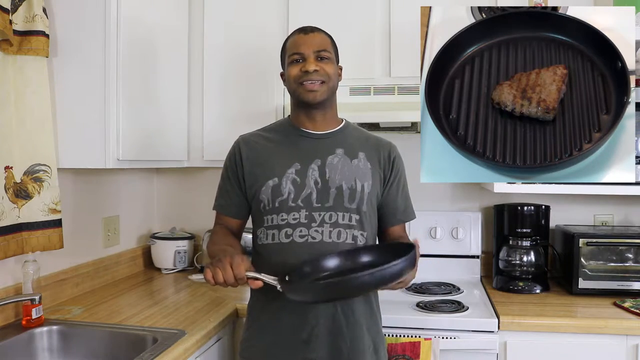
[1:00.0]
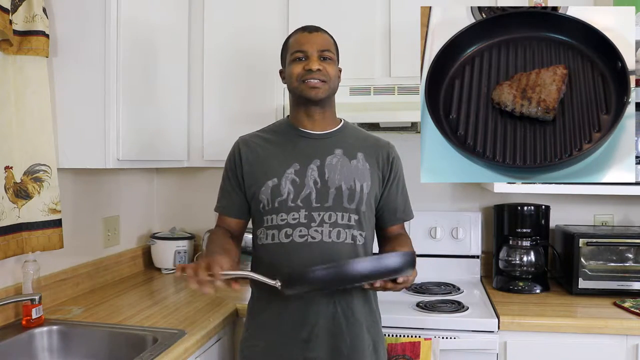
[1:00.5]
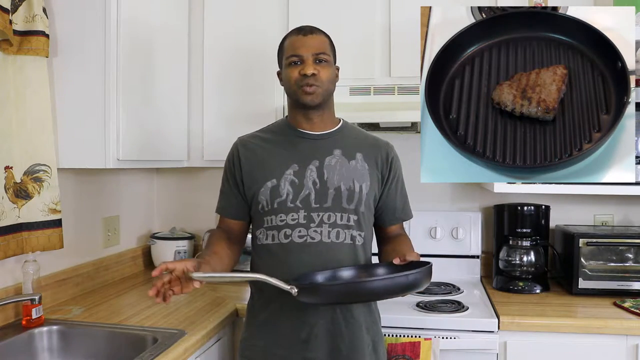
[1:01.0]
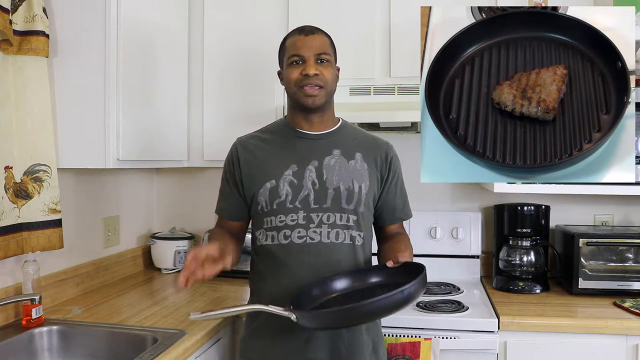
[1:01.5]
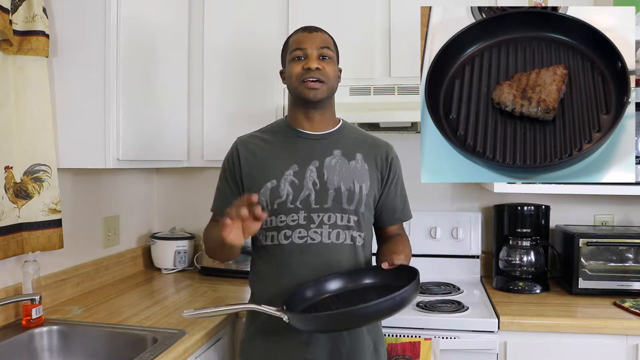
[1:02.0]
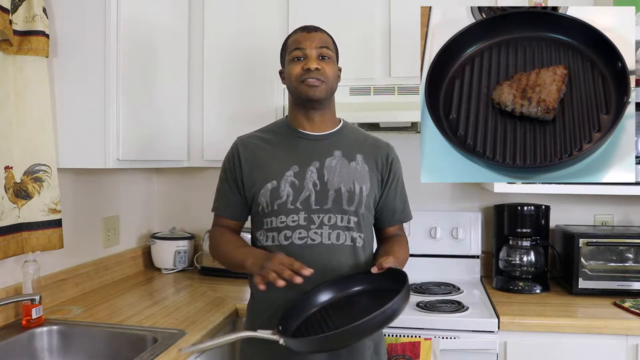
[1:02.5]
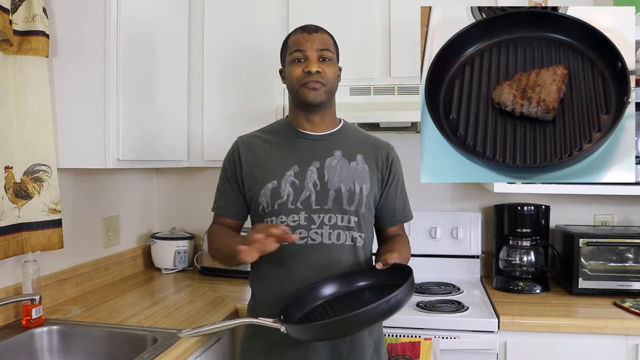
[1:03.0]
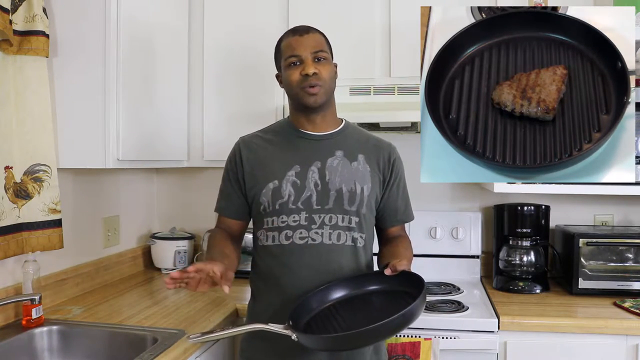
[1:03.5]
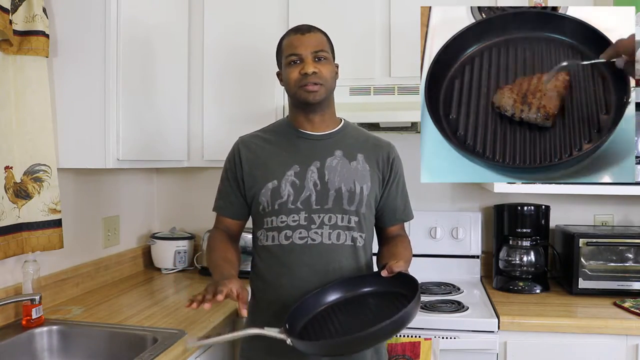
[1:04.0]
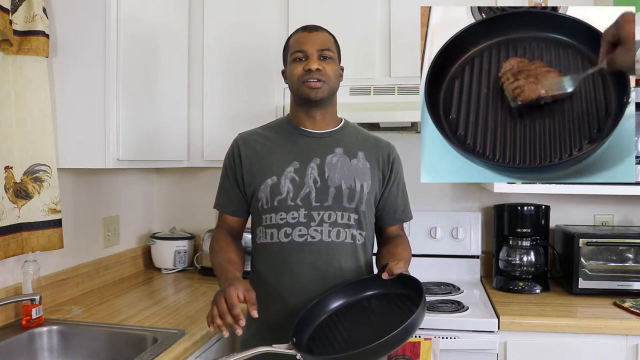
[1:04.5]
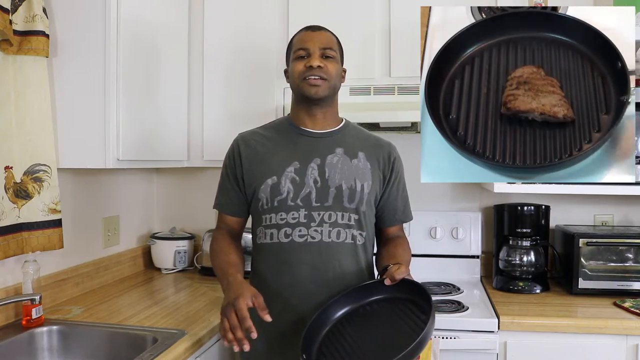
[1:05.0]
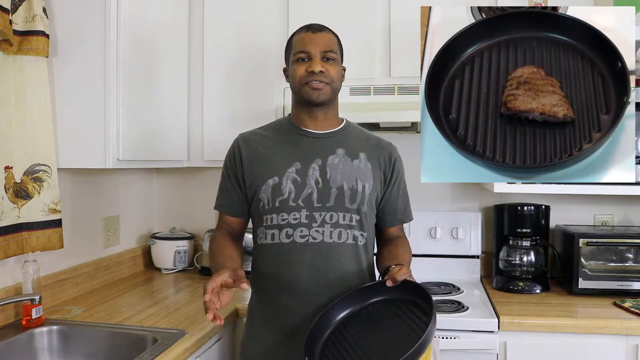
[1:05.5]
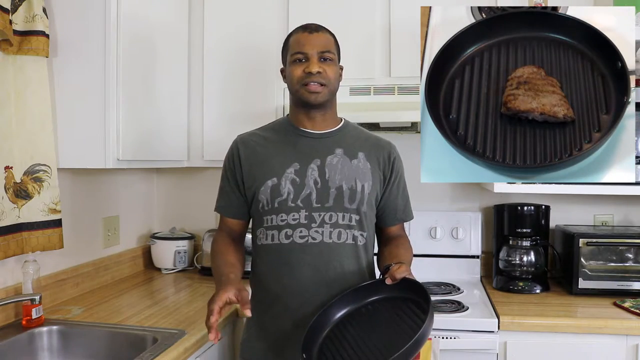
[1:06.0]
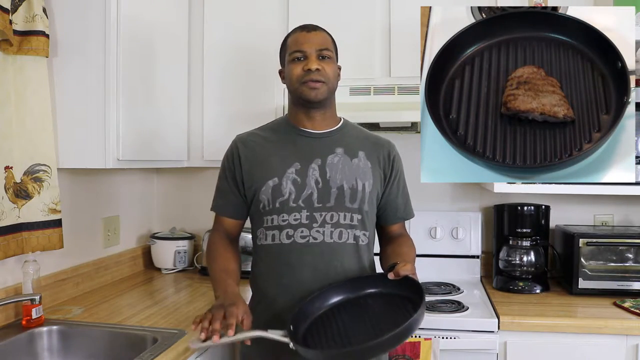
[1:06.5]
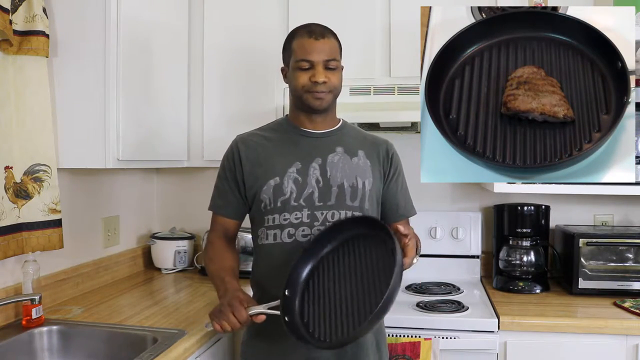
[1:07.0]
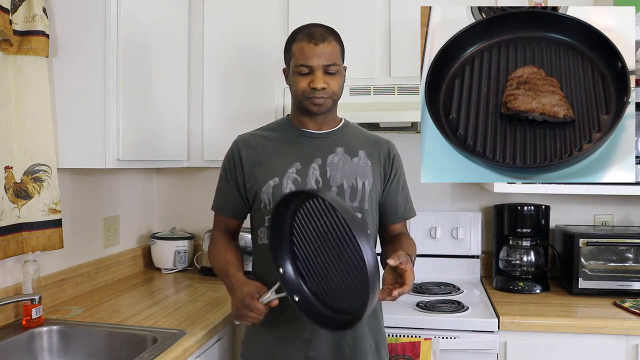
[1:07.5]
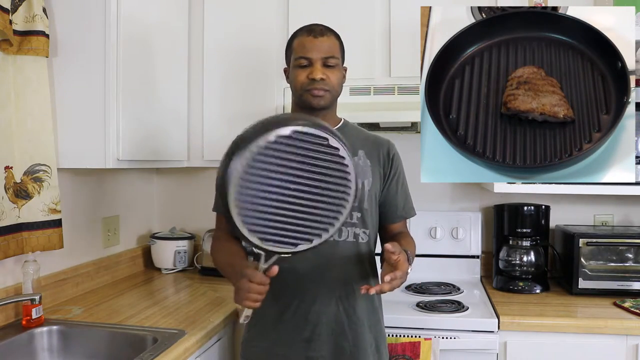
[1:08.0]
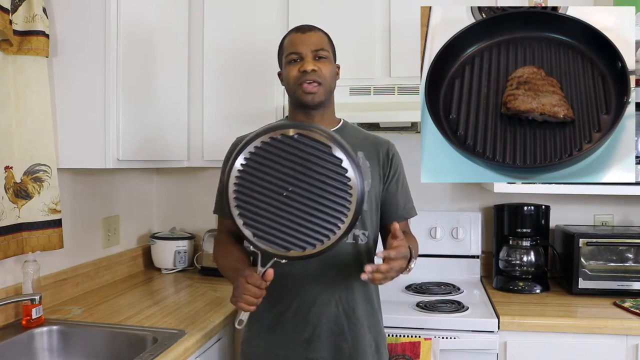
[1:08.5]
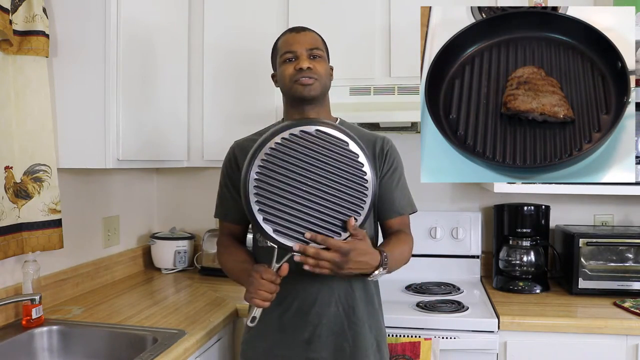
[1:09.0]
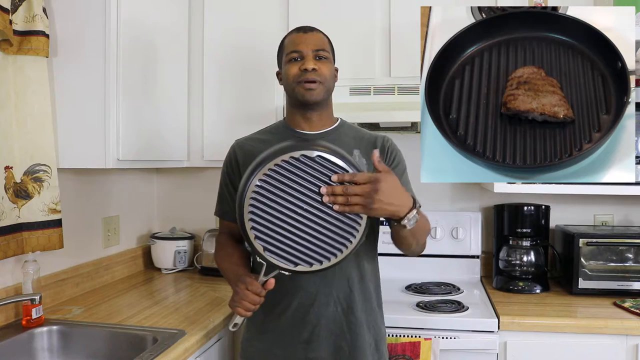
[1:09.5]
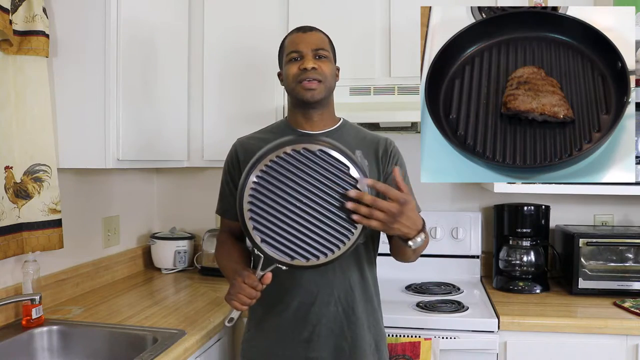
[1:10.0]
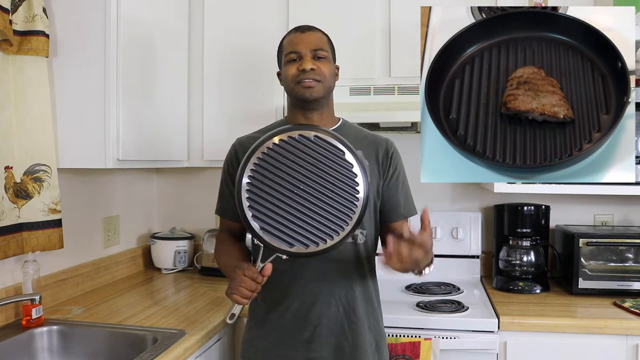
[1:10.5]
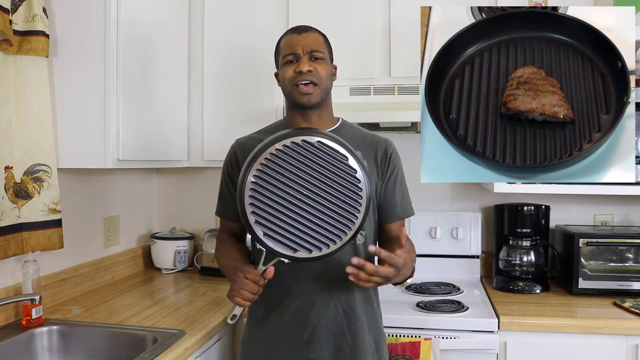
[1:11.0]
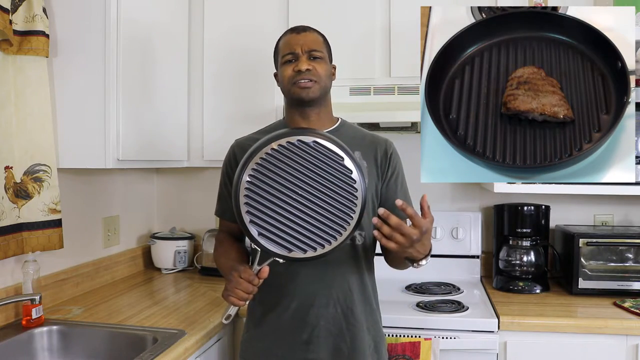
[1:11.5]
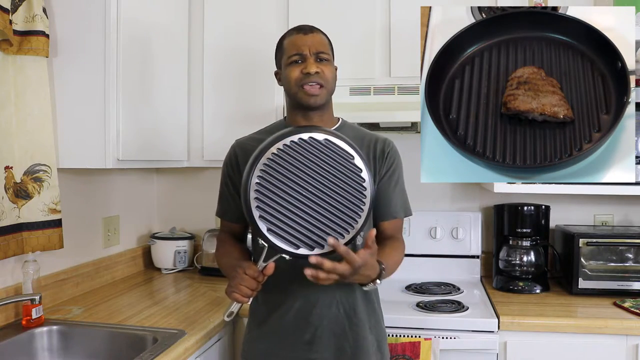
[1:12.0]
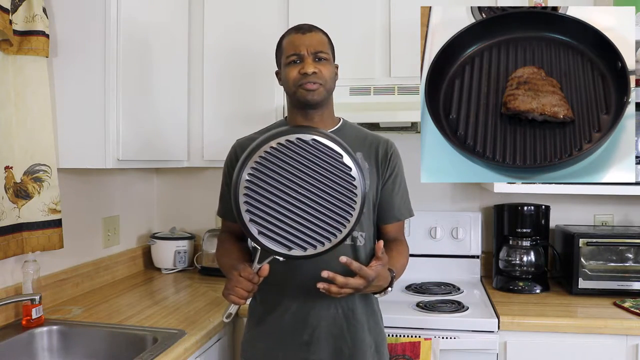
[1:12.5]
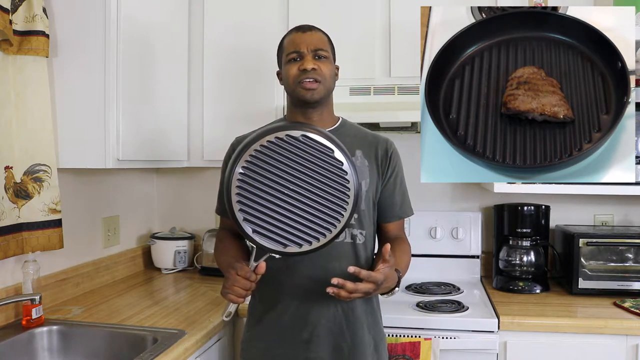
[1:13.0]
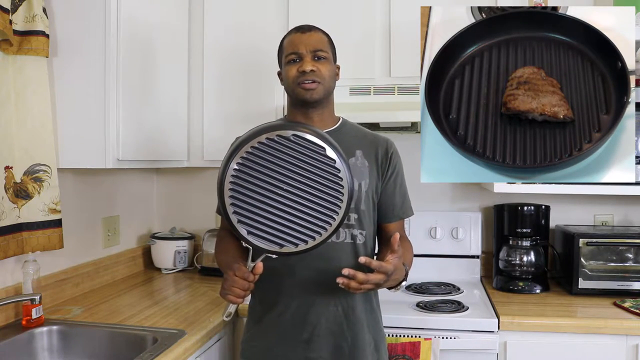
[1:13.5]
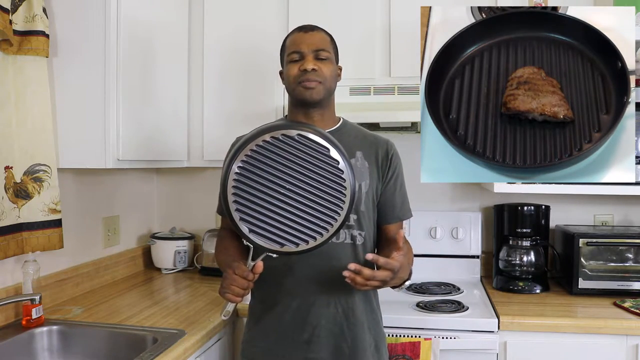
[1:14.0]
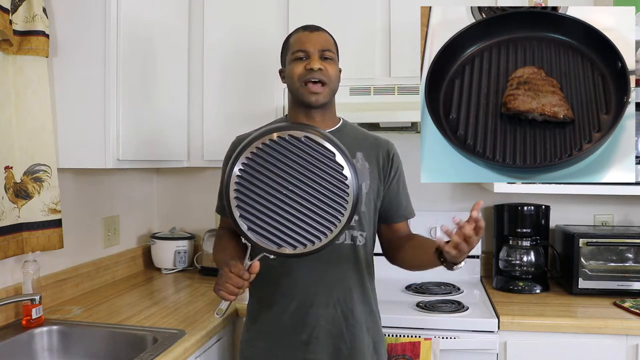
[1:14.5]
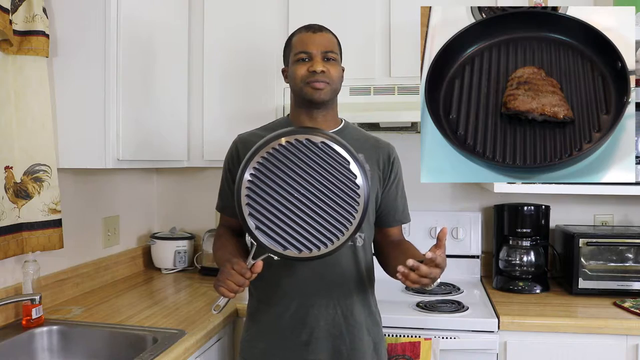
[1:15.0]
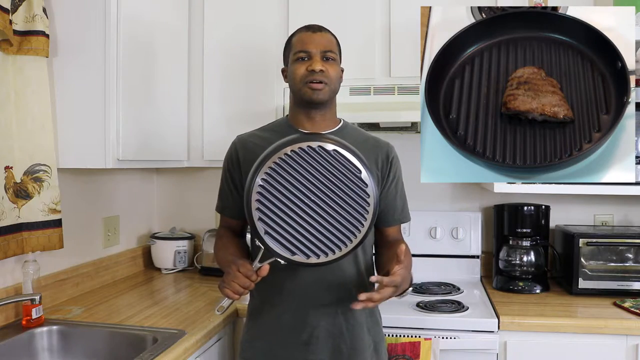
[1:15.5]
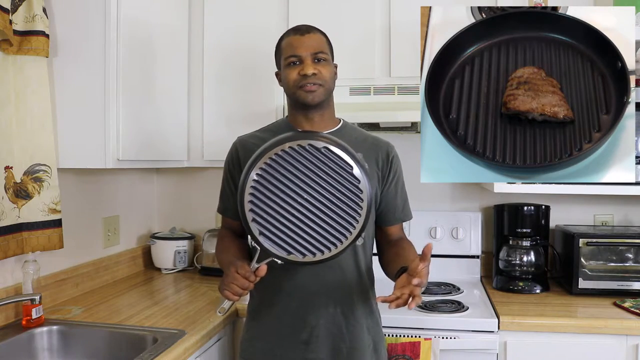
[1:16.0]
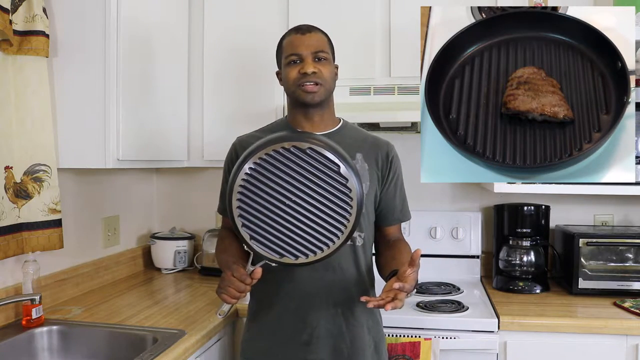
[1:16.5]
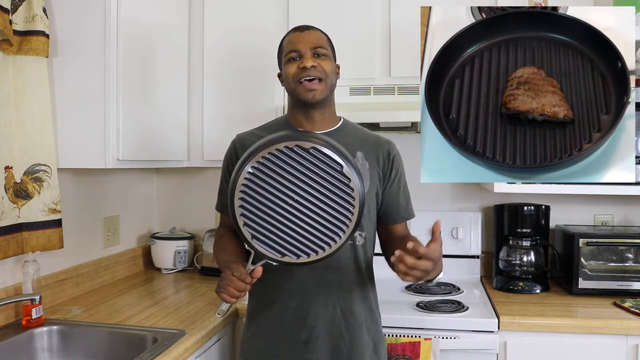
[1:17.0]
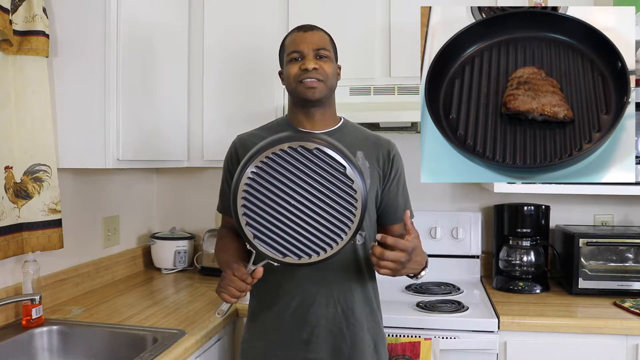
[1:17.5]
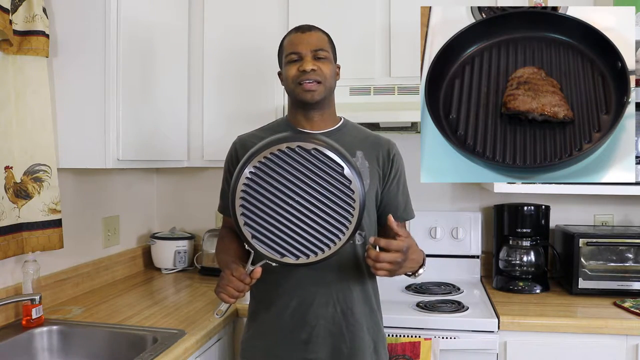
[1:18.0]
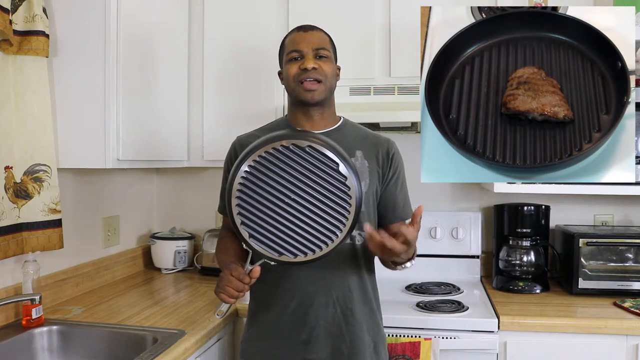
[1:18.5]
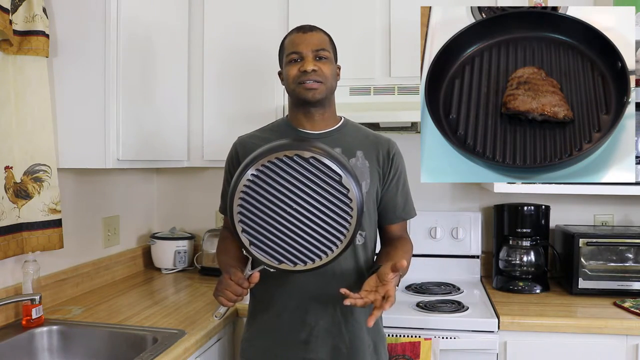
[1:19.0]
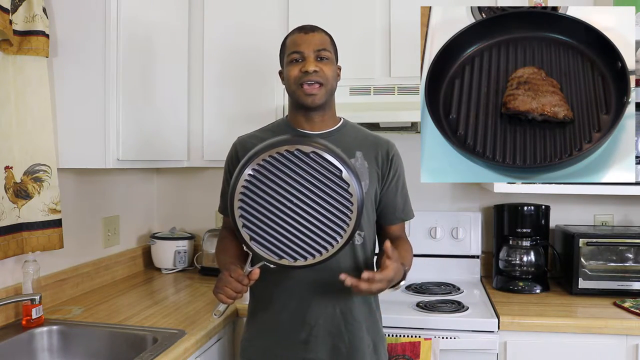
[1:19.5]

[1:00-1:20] A man stands in a kitchen, wearing a gray shirt showing the evolutionary chain of humans with the words "meet your ancestors" below the image. He supports a pan with both hands, holding the handle with his right hand and the bottom of the pan with his left. He then moves his right hand away from the handle, holds the pan using only his left hand, and starts making motions toward the camera with his right hand. A smaller video overlaid in the top right corner demonstrates the pan being used to cook: the pan is on top of a stove with a piece of meat cooking inside it.